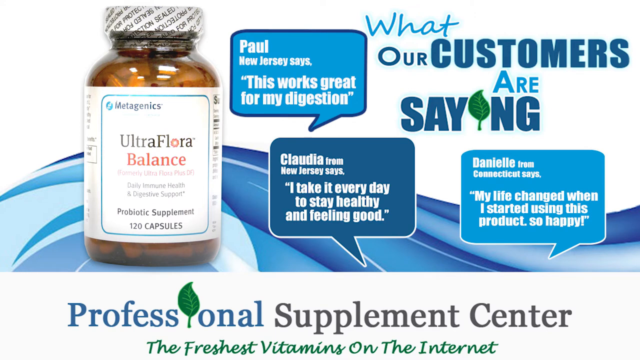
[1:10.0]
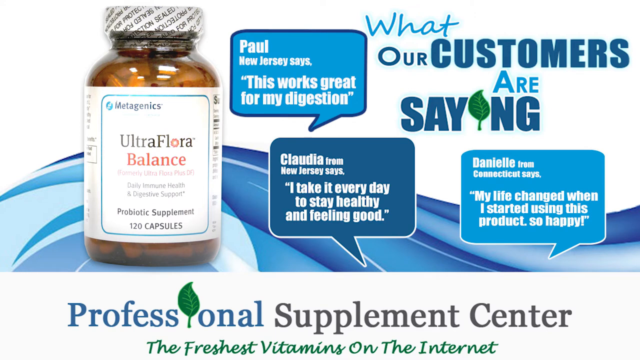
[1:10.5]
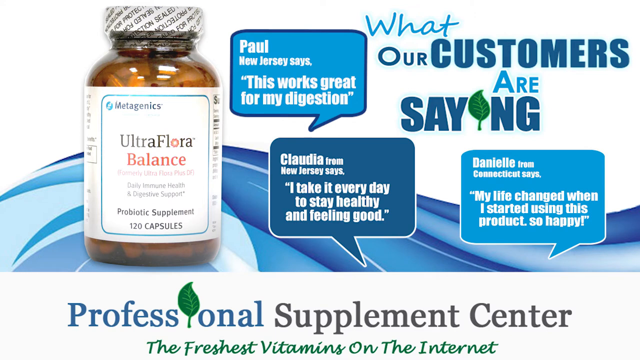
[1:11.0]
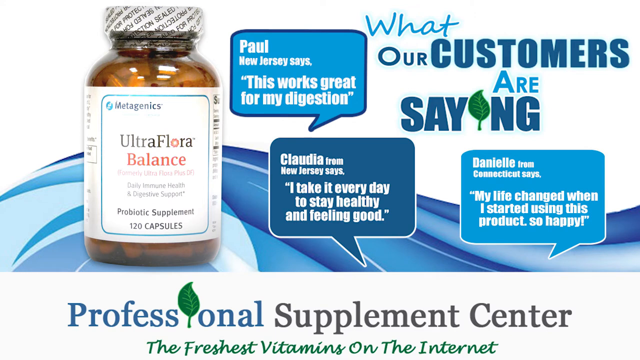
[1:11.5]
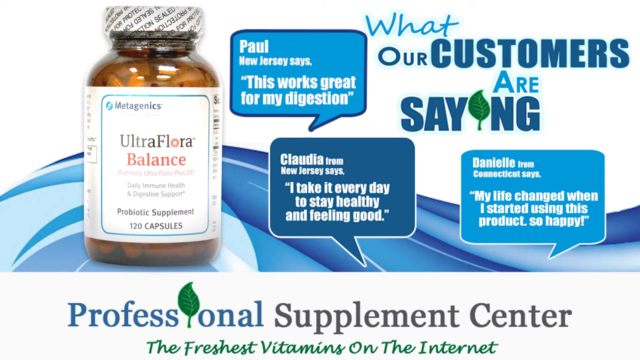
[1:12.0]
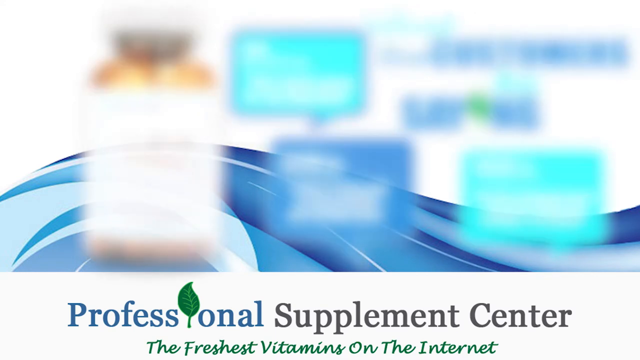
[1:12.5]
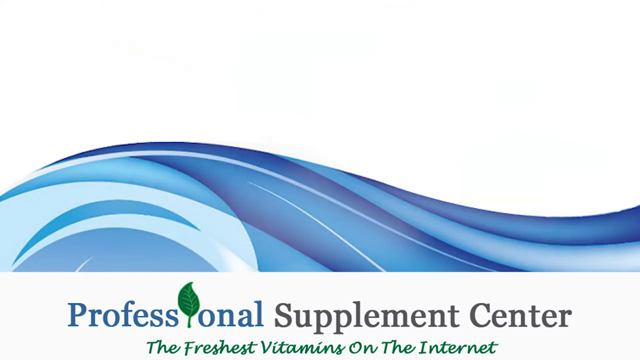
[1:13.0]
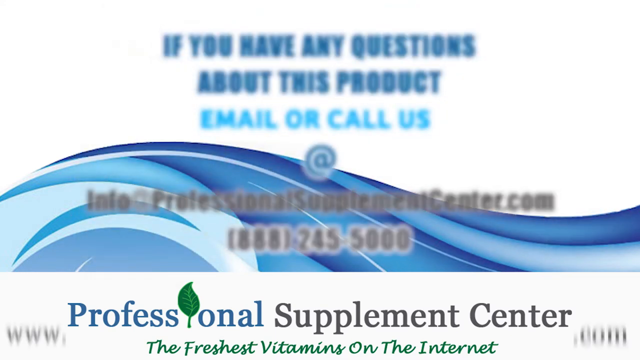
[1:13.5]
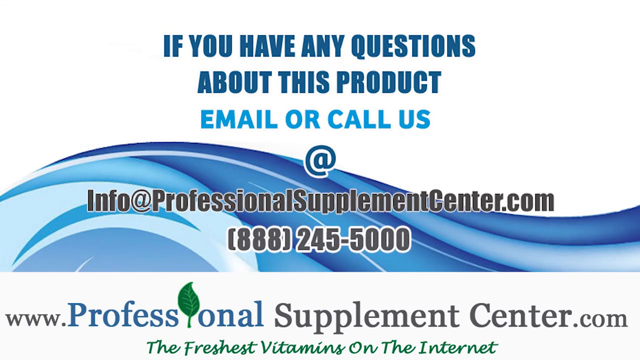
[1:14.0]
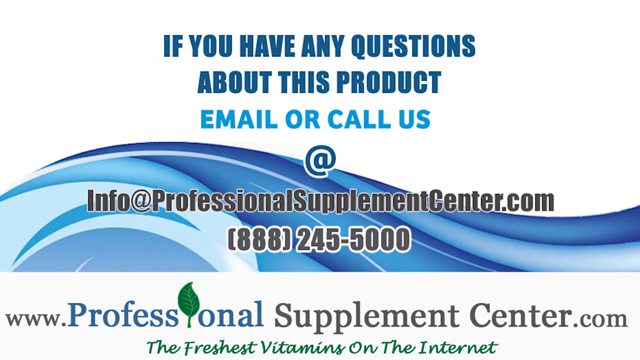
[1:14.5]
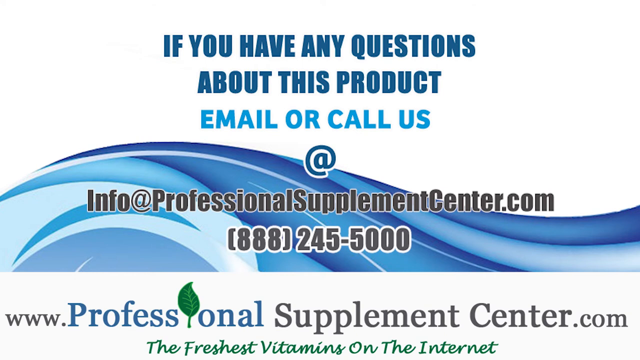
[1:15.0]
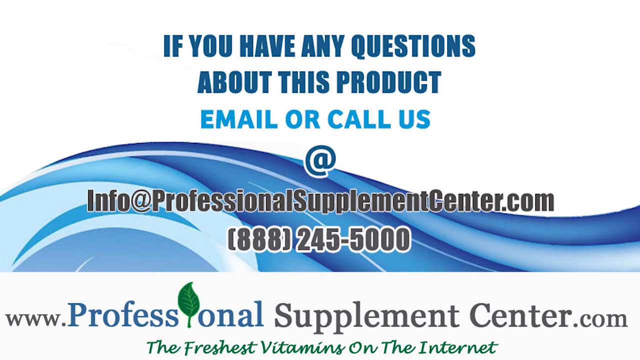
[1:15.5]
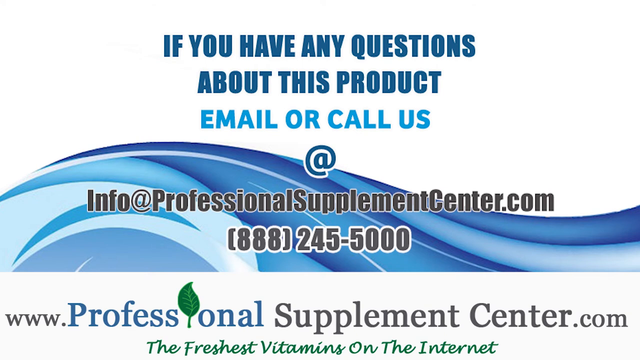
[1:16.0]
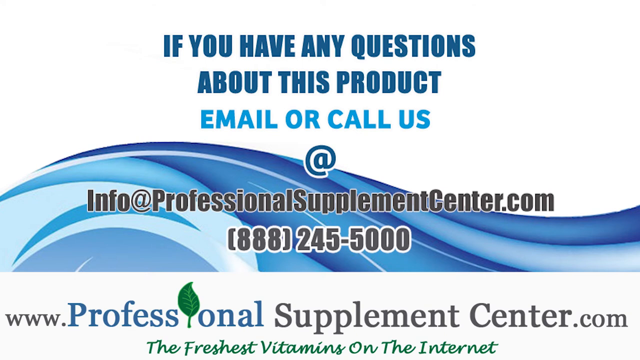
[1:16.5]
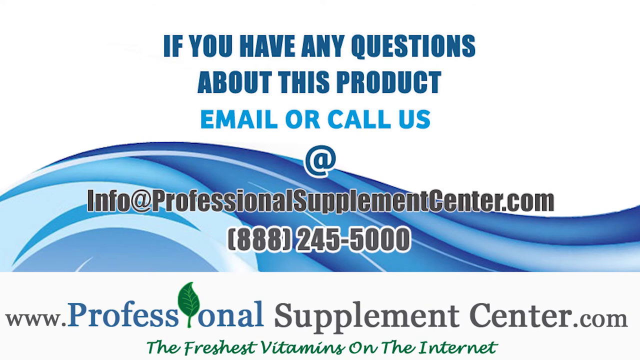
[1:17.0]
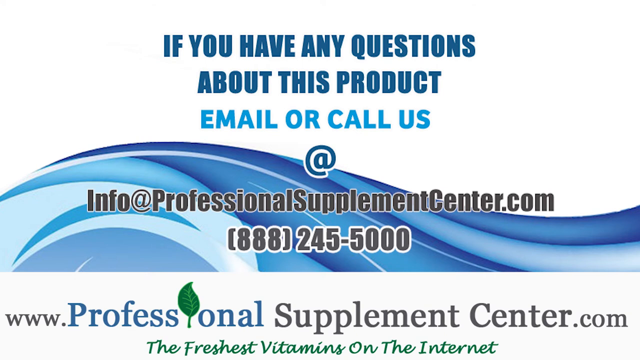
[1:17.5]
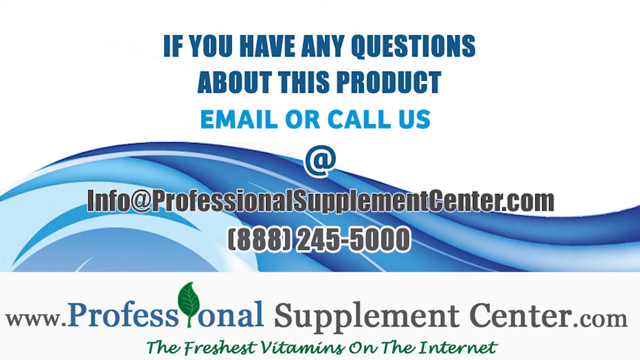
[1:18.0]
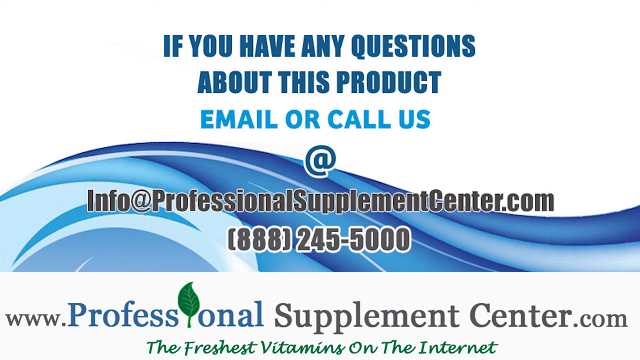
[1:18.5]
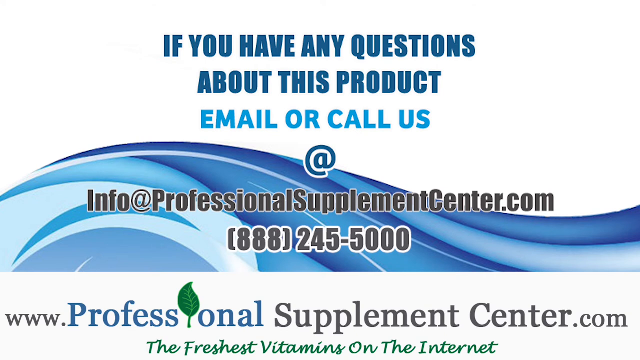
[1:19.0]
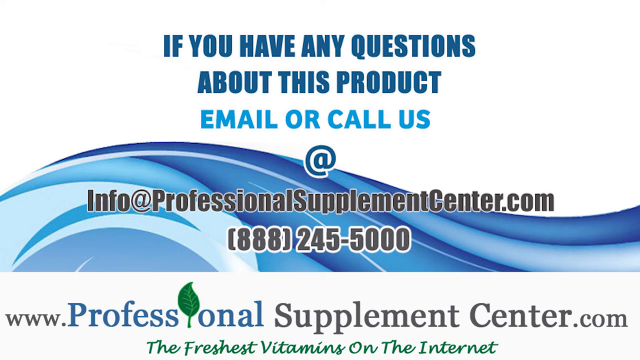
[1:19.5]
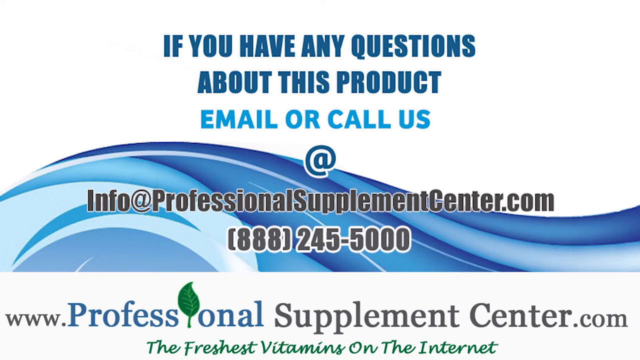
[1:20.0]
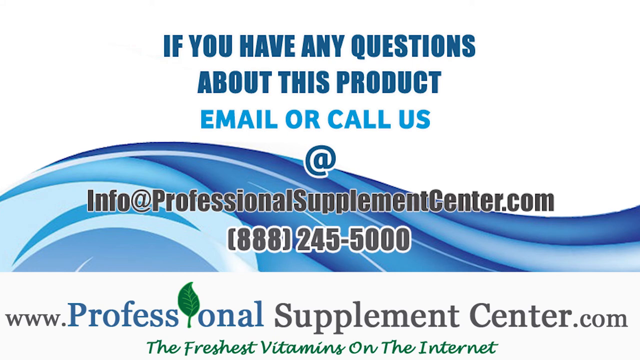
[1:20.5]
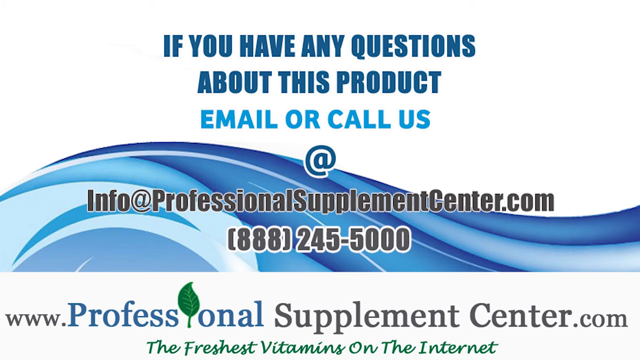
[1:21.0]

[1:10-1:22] Contact information is shown: "if you have any questions about this product, email or call us at info at professionalsupplementcenter.com", along with the number "888-245-5000", "www.professionalsupplementcenter.com" and "the freshest vitamins on the internet".